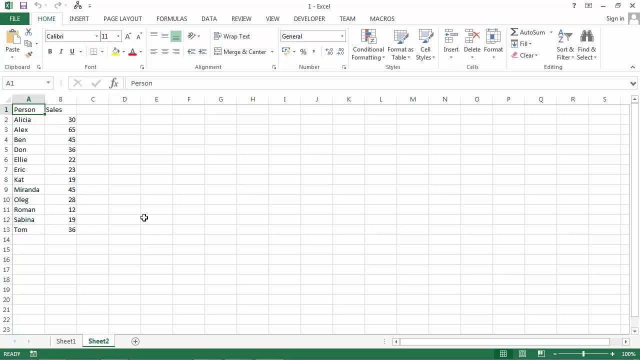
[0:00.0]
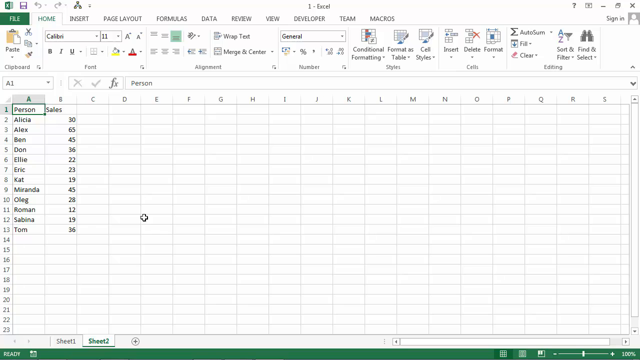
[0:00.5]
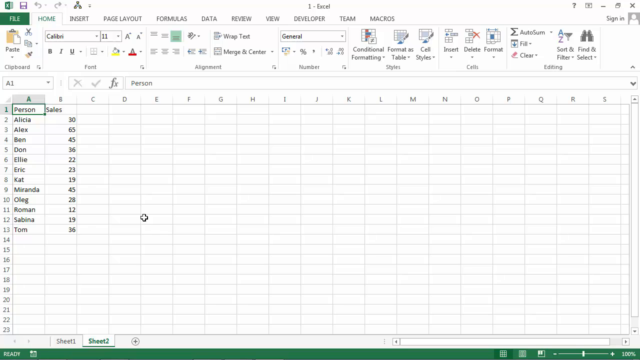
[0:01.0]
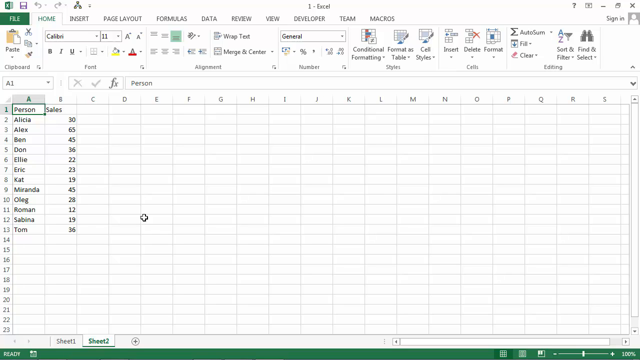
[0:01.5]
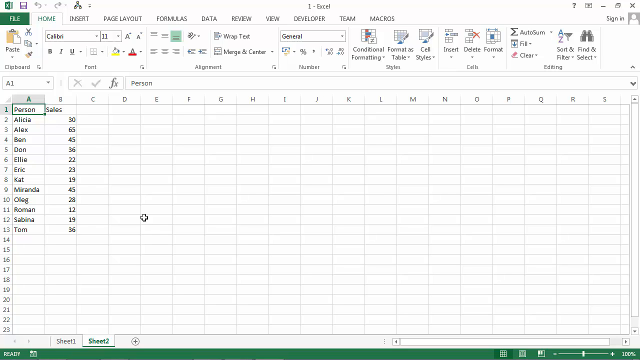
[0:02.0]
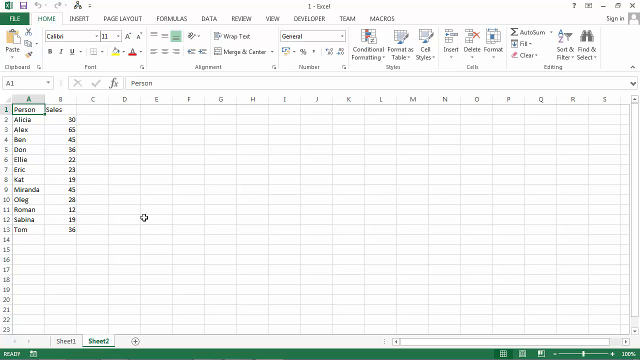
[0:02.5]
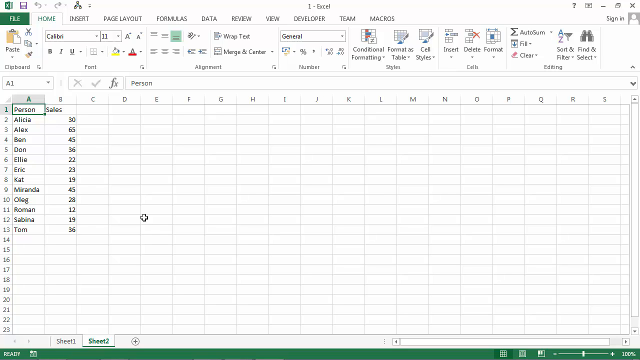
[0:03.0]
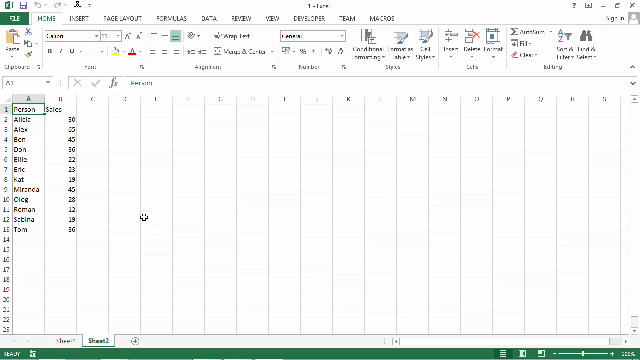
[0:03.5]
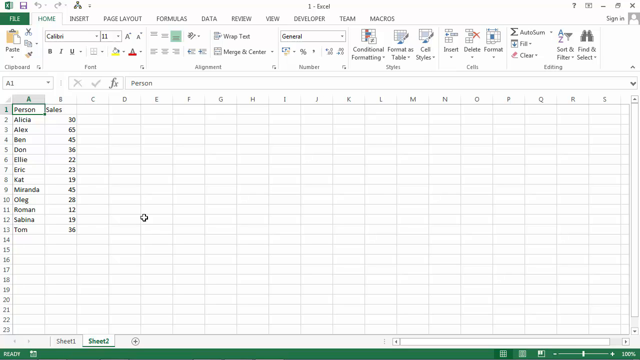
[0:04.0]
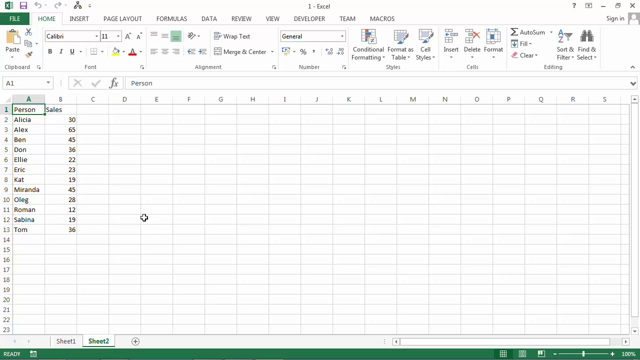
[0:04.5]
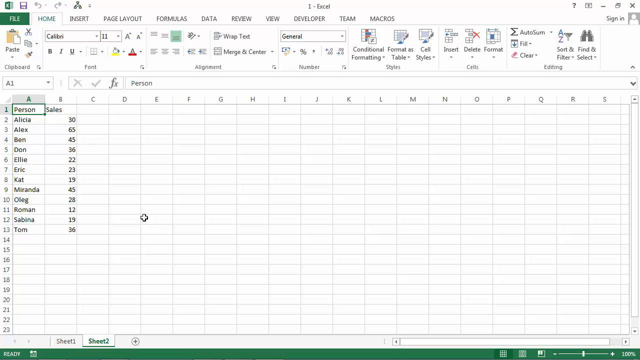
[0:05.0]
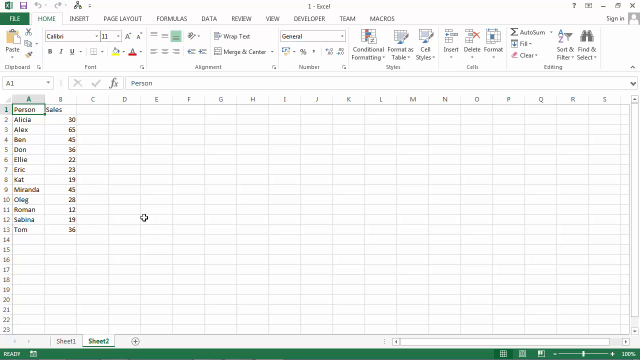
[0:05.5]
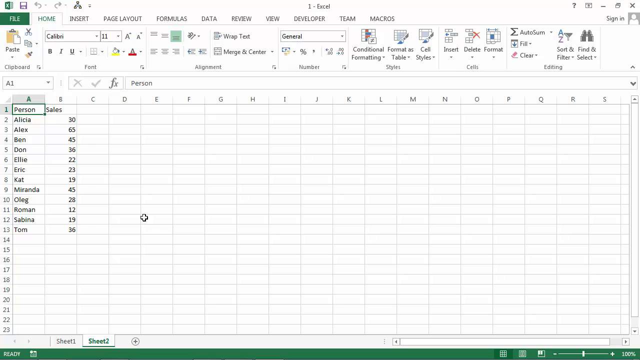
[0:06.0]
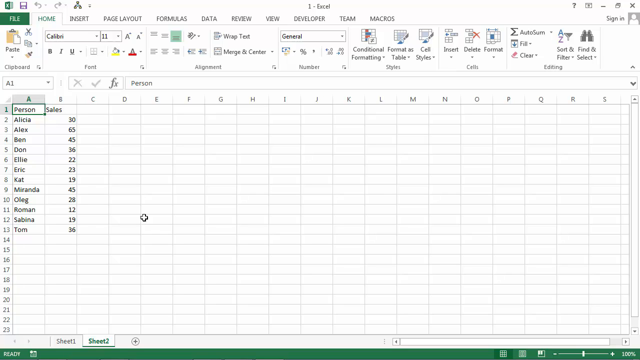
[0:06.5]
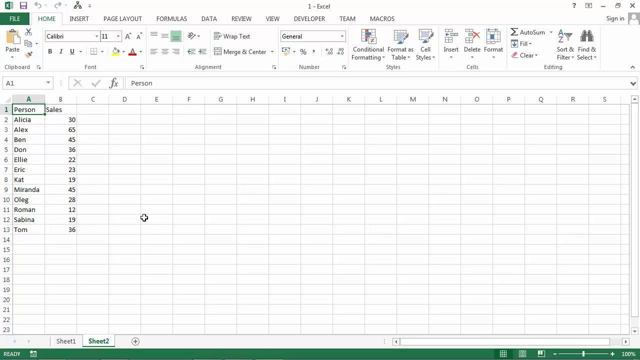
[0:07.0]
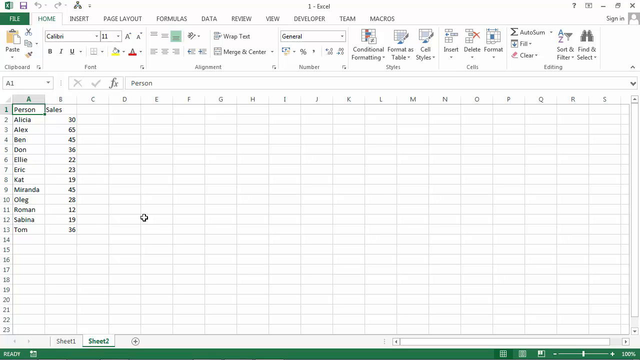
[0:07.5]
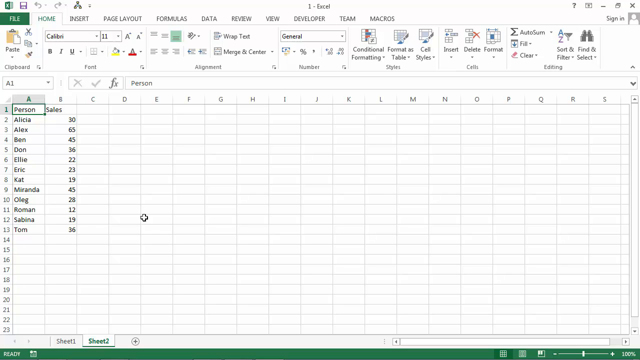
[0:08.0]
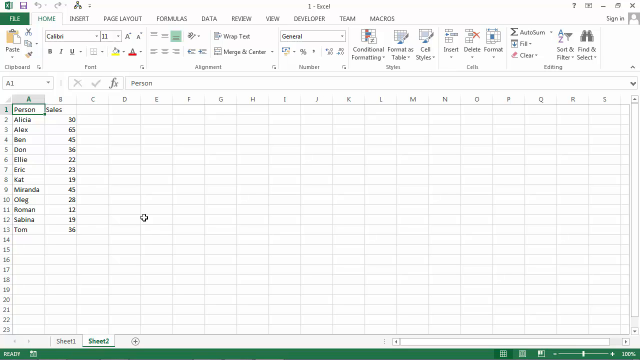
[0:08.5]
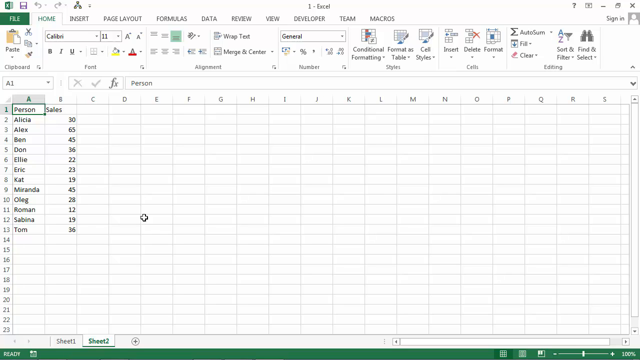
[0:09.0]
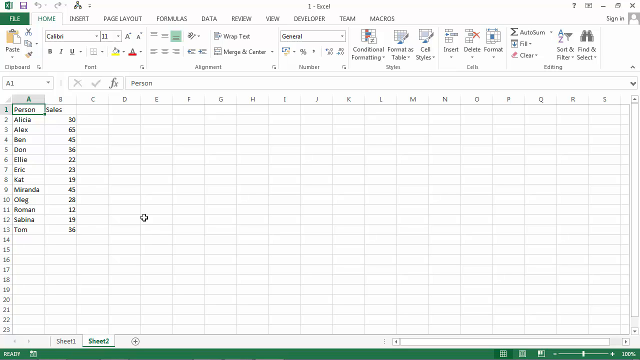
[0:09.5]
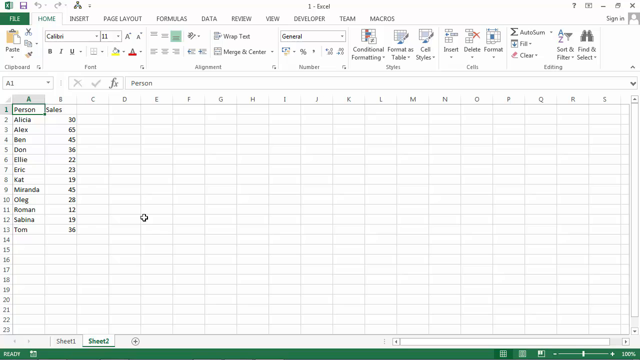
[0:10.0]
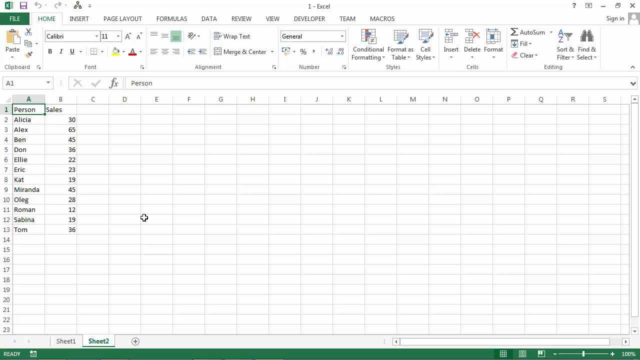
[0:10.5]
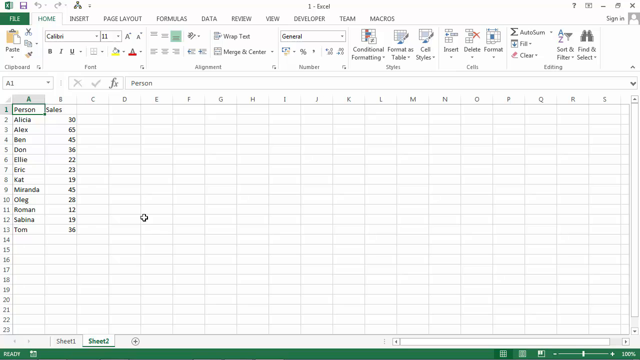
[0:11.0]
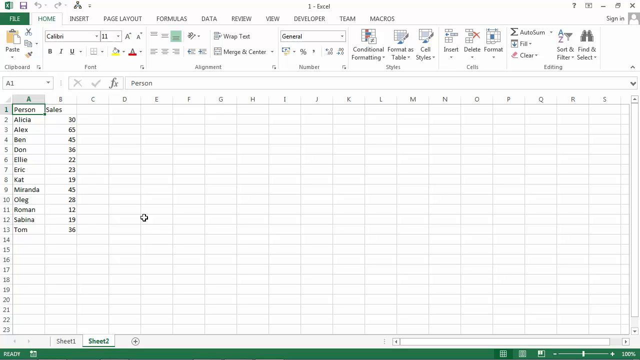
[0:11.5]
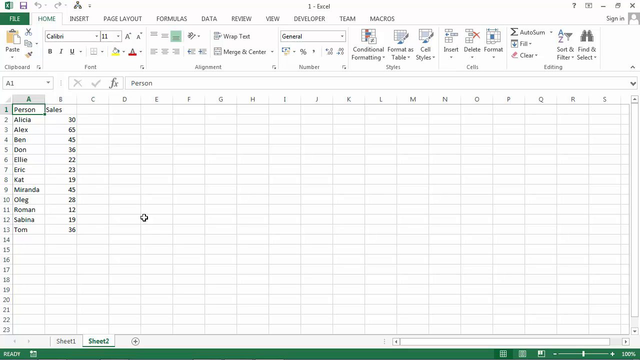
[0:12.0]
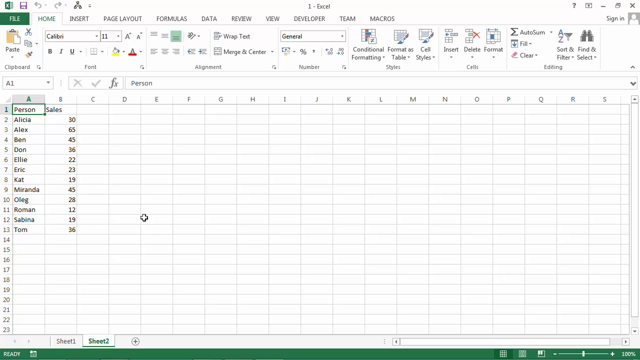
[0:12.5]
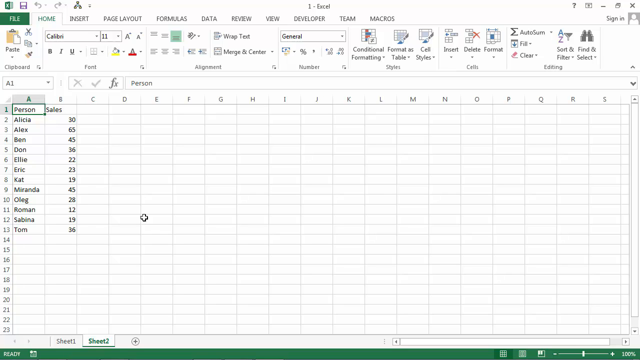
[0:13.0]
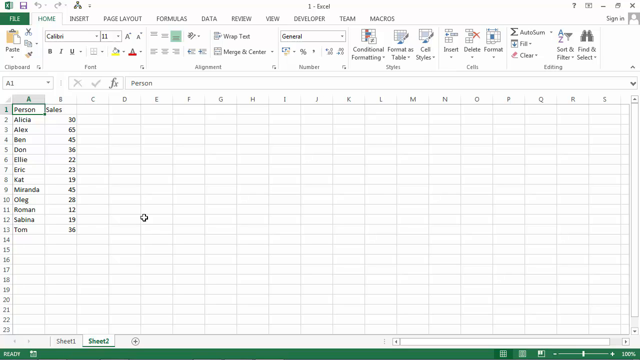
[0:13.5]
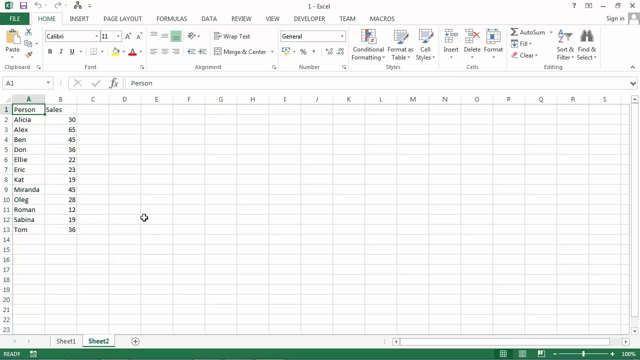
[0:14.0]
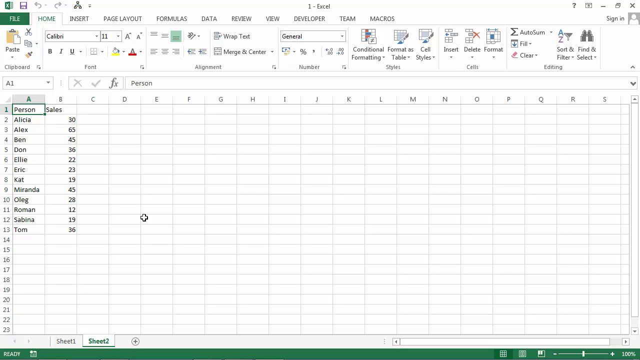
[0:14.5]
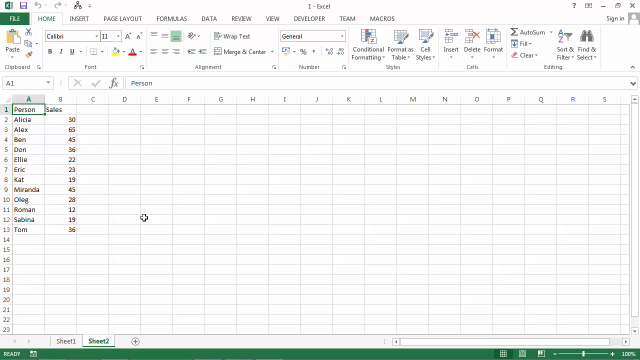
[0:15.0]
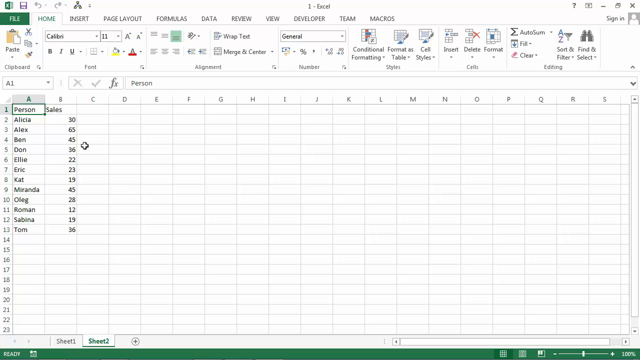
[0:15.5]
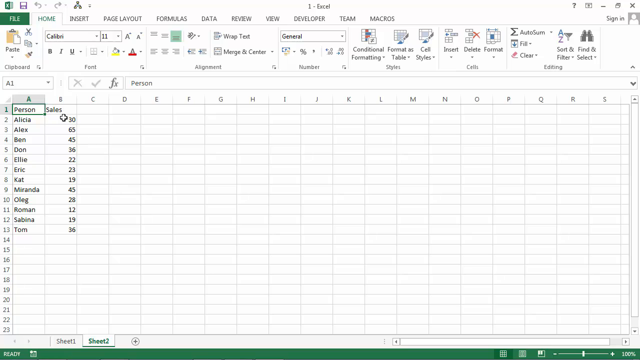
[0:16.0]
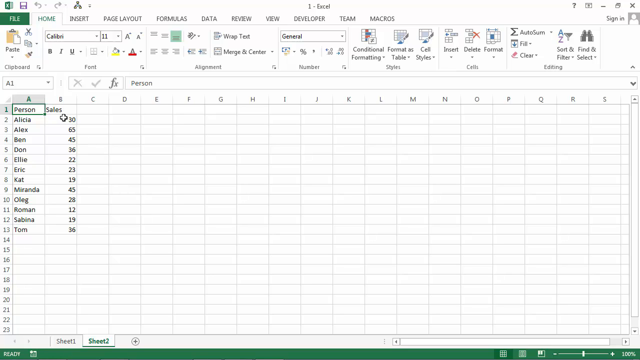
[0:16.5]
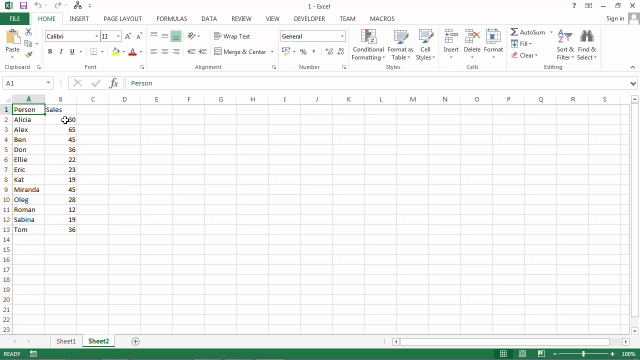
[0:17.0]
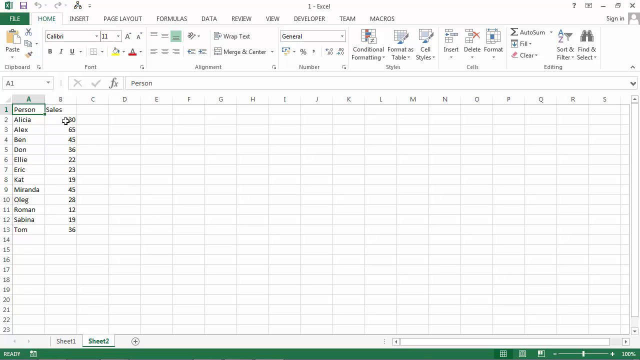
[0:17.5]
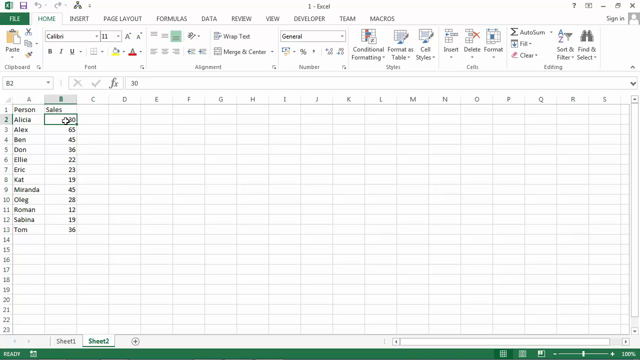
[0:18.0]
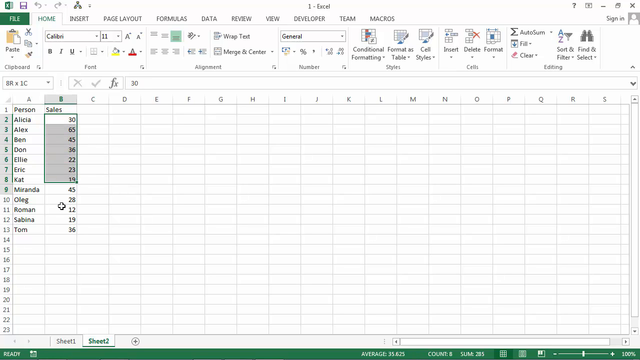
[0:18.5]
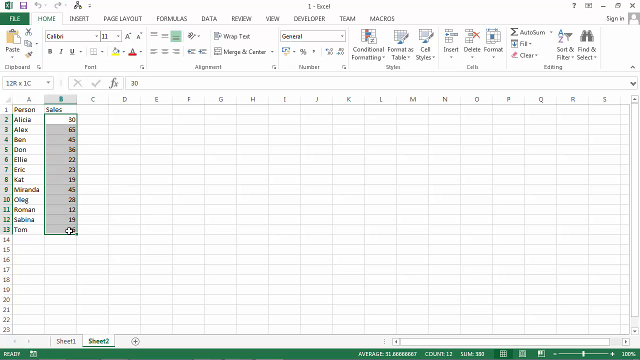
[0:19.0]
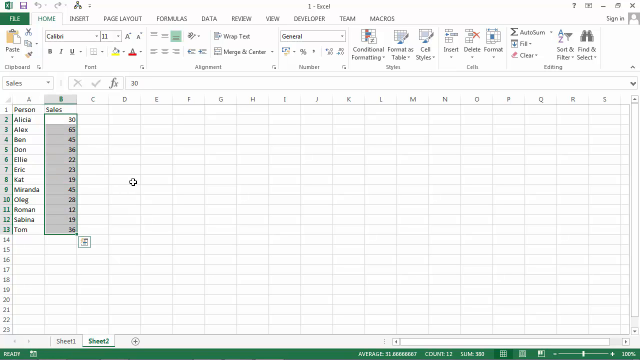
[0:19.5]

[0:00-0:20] A screen recording shows an Excel file with two columns of data. The first column is labeled person and the second is labeled sales. From top to bottom, the entries under person are Alicia, Alex, Ben, Dawn, Ellie, Eric, Kat, Miranda, Oleg, Roman, Sabina, and Tom, and the sales numbers are 30, 65, 45, 36, 22, 23, 19, 45, 28, 12, 19, and 36. A plus-shaped cursor is on the screen. After a stretch with nothing happening, the cursor moves up toward the top of the sales column and clicks on the box labeled person. It then clicks on the top of the sales numbers, starting with 30, and drags to select all the way down to 36, which surrounds the boxes in a green outline and overlays them with a gray fill. The cursor then moves to the top of the persons list, hovering over Alicia. There is no other data on the Excel sheet. Across the top of the screen, the Excel commands and functions are lined up in toolbars.